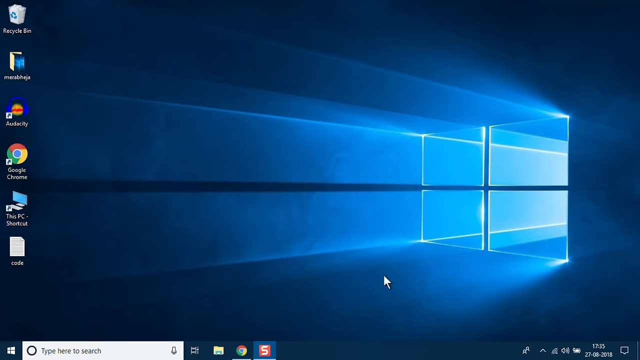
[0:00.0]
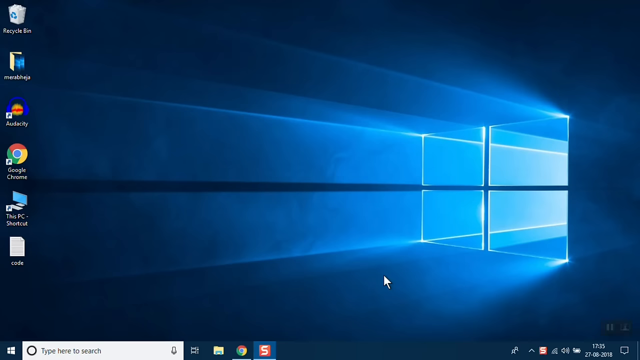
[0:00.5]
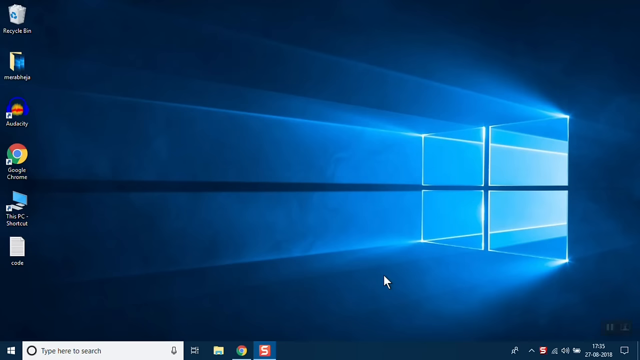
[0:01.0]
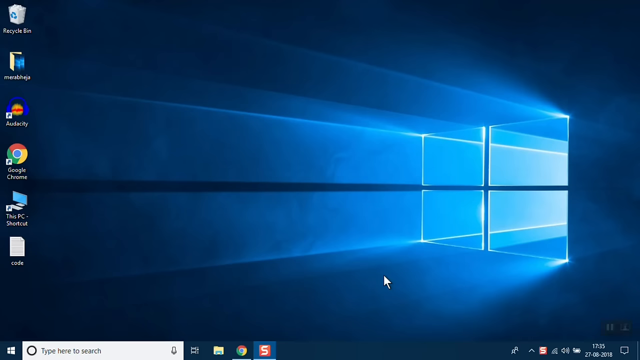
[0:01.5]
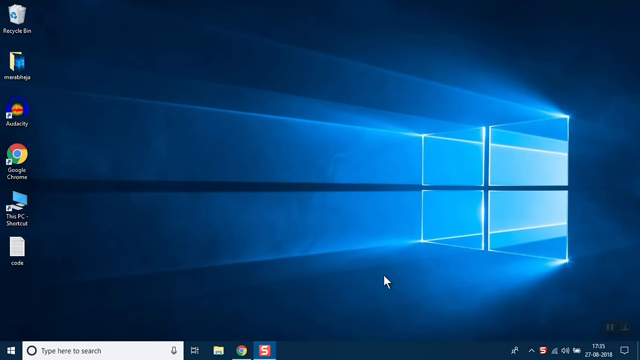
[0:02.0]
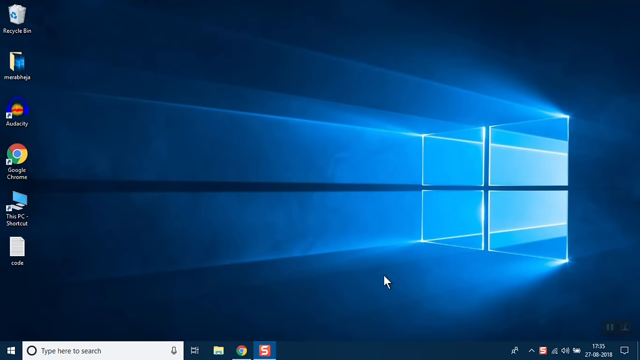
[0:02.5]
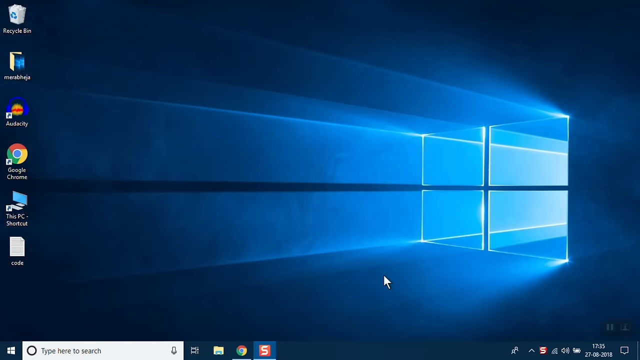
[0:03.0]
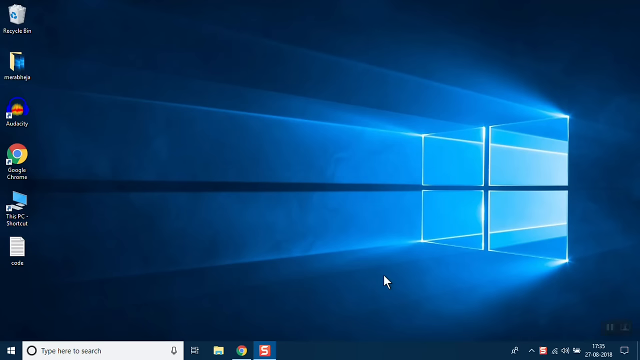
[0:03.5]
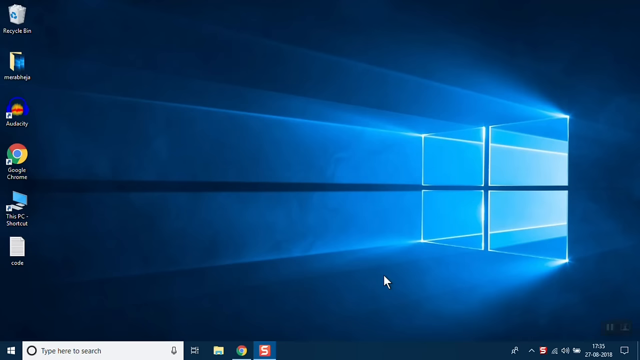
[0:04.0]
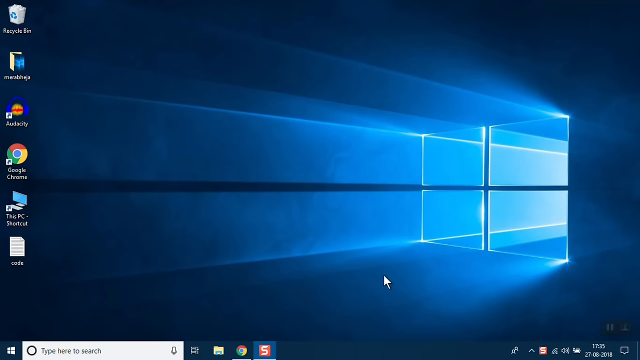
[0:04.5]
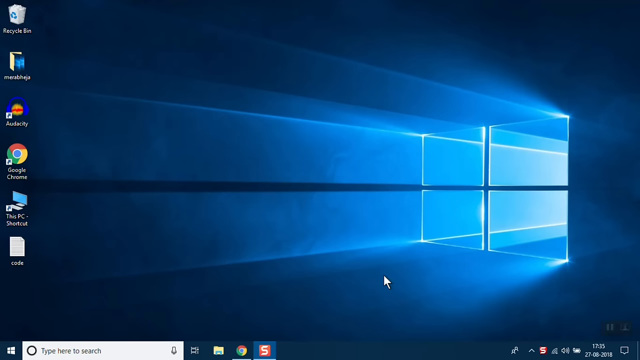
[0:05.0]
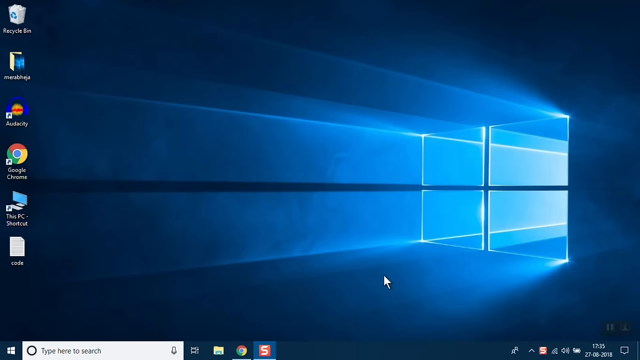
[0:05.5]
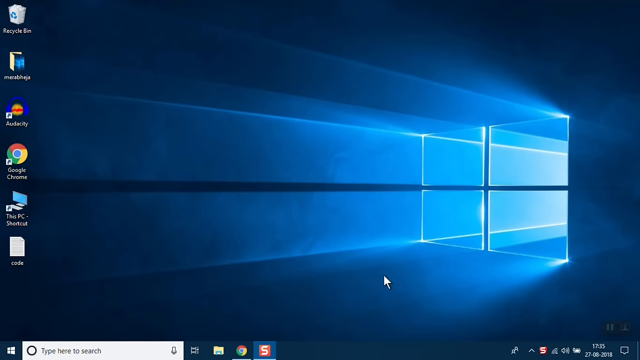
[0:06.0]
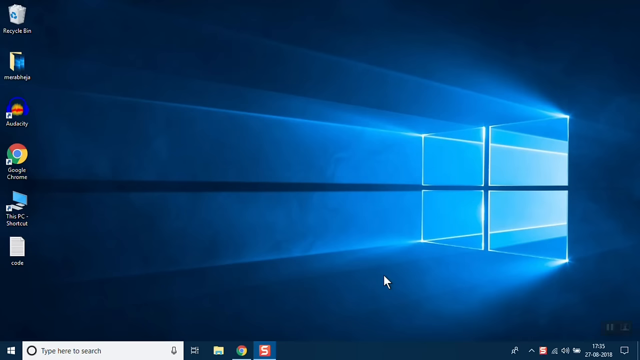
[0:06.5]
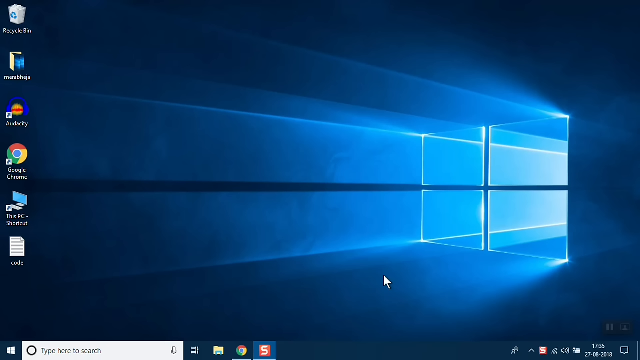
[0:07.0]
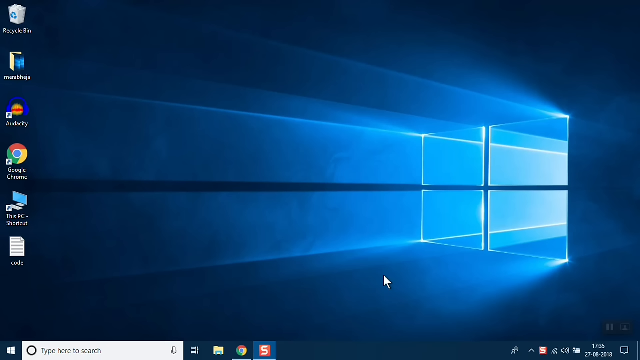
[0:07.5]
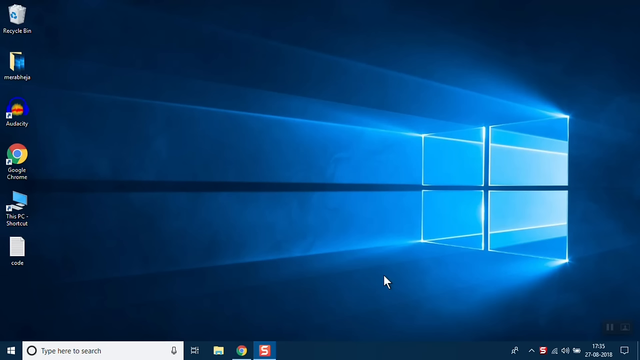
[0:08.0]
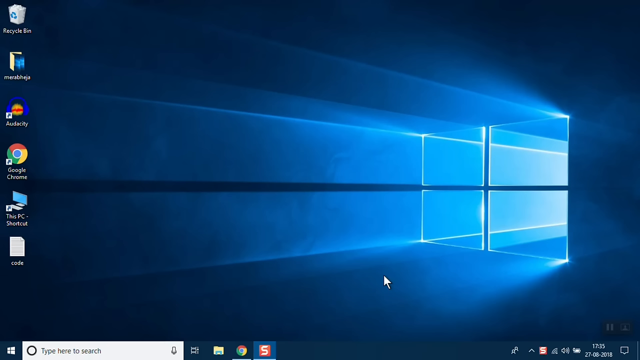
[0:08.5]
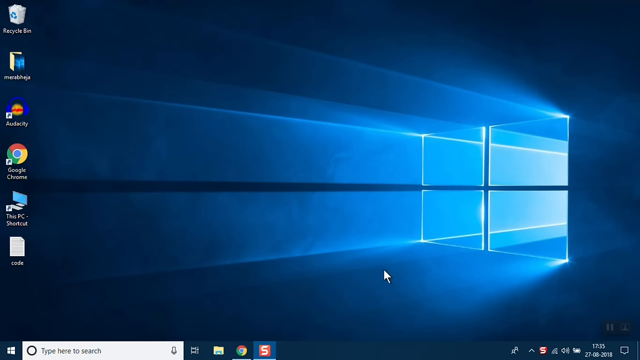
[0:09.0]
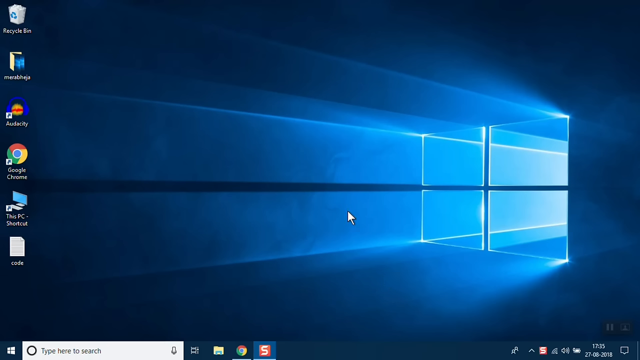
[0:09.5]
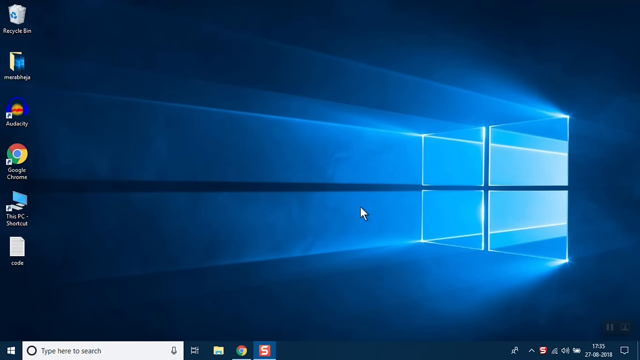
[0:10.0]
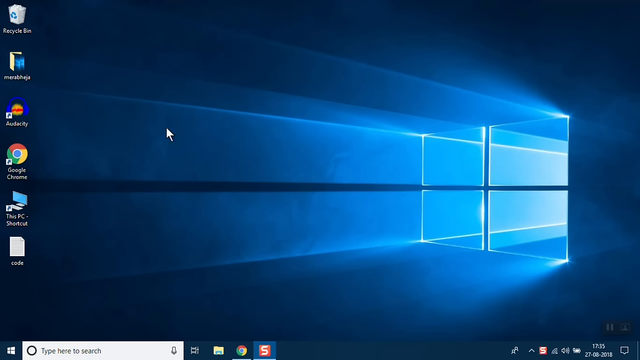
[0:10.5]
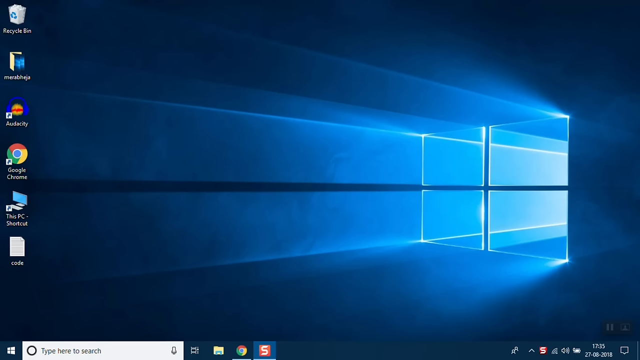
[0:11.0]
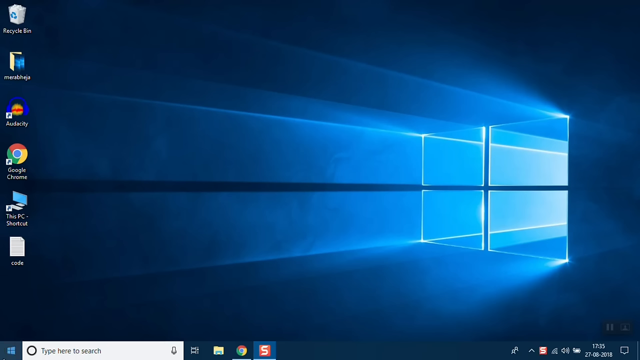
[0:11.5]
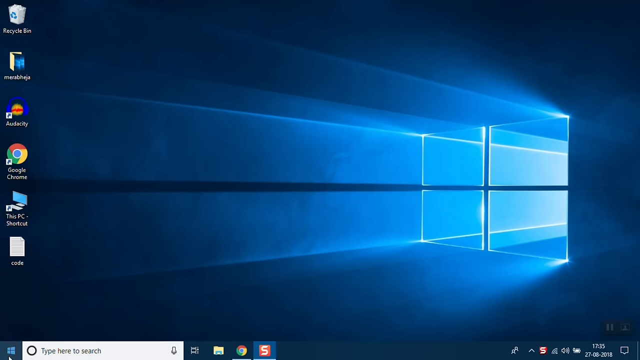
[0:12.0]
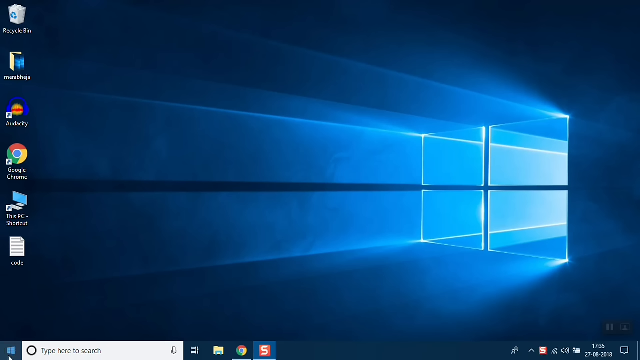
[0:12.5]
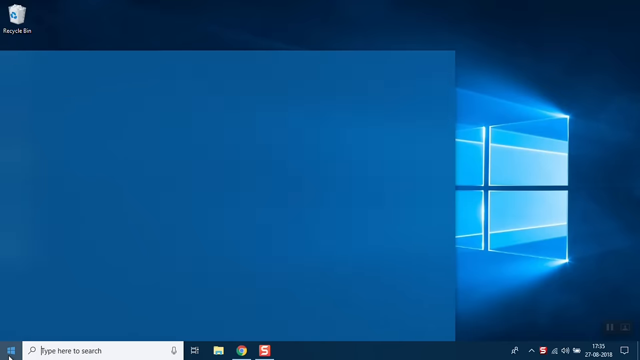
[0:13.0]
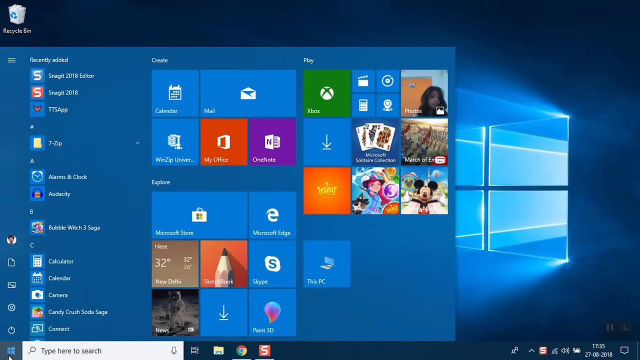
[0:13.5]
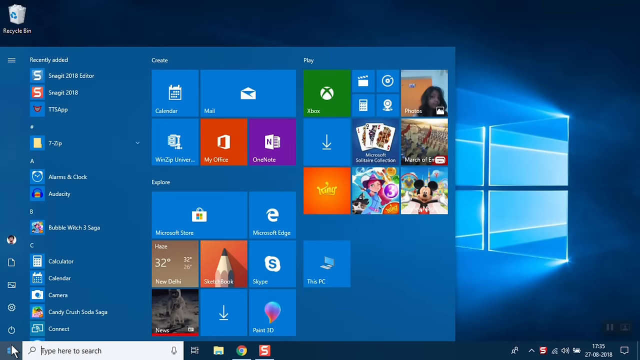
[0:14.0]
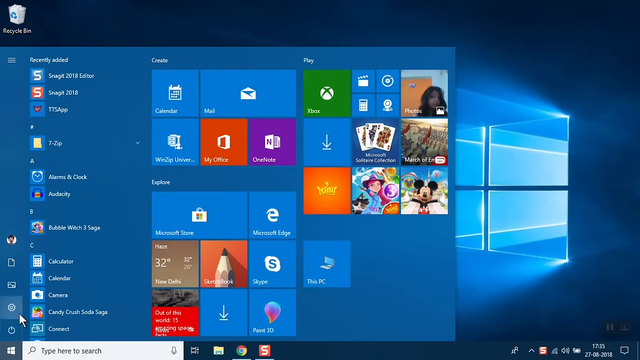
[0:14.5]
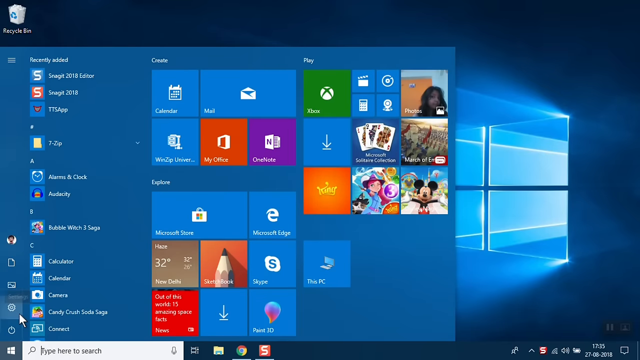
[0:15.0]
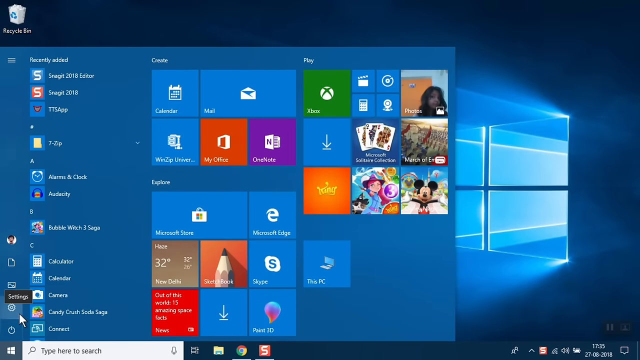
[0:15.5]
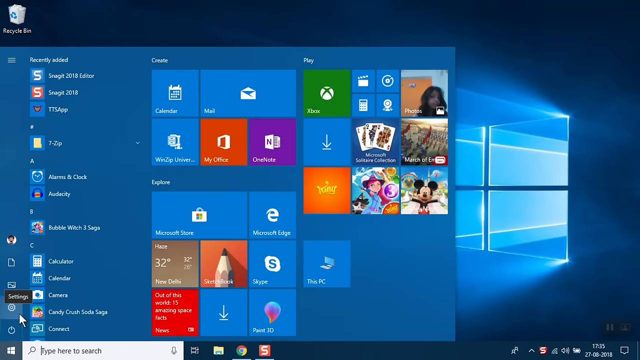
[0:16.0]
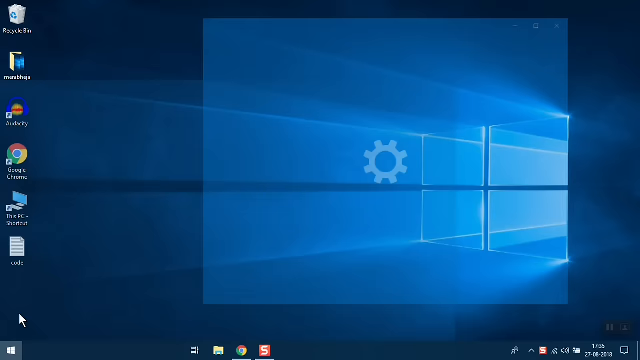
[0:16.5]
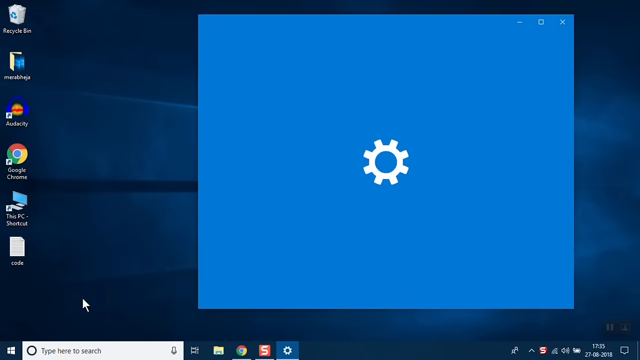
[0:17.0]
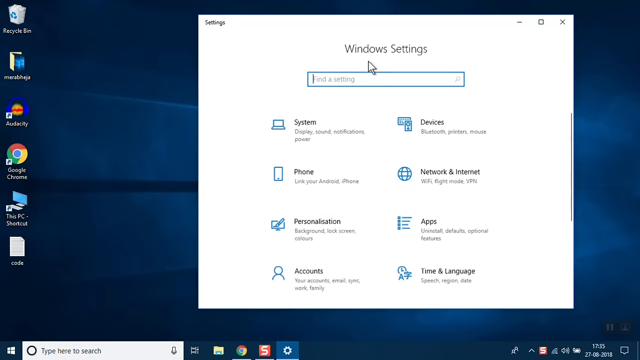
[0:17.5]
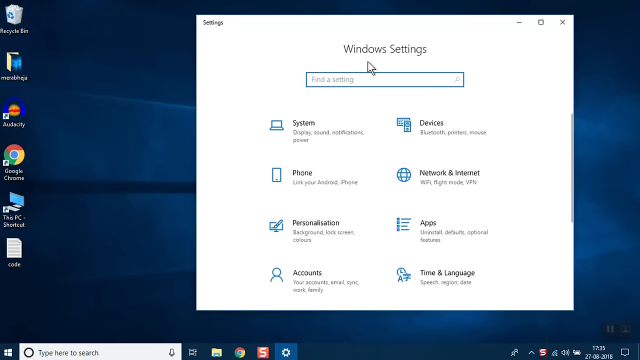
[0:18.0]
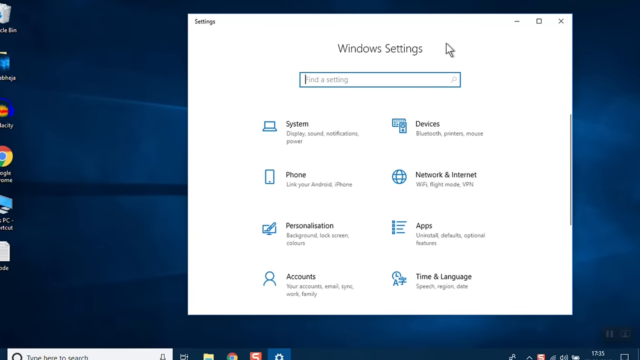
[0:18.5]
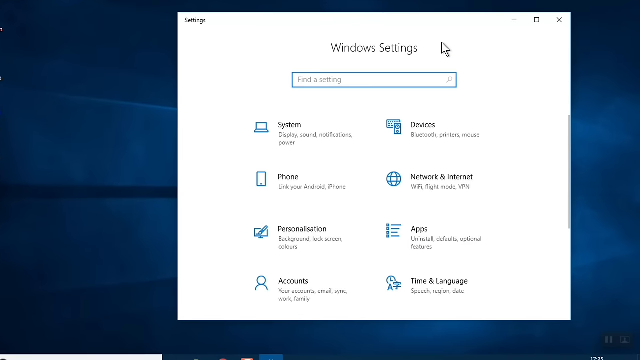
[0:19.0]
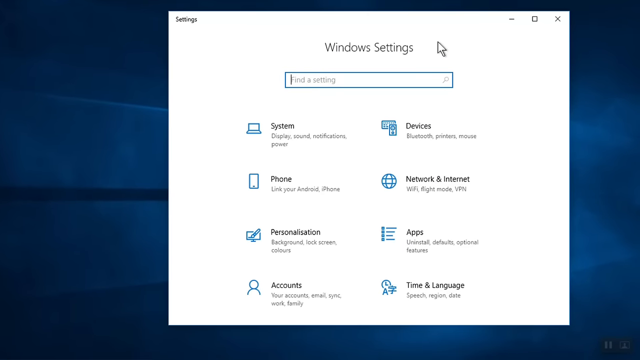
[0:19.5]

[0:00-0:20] The view shows what looks like a laptop or desktop screen with a mostly blue background in different shades of blue; on the right there are four windows through which light is shining, creating the different shades. On the left is a column of six icons: the top one is a recycle bin and the fourth one down is Google Chrome. A cursor rests in the lower center of the screen. After a few seconds it moves up, then to the left, and kind of exits the screen. It apparently clicks something, because a large window opens that does not cover the whole screen and has a slightly lighter blue background. Its left panel says "Recently added" and lists about a dozen things, including a calculator. The right side has rectangles of different sizes, more of a visual layout; one of them is a calculator and another is mail. The person then clicks something, and in the center of the screen, as the view zooms in, a square white box appears with "Windows Settings" at the top and a search field right below it. The cursor is to the right of "Windows Settings". Beneath it are a number of blue icons in two columns, each with words written on the right, including system, phone, personalization and accounts.